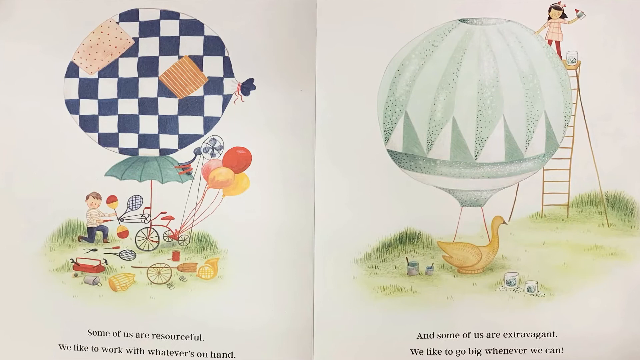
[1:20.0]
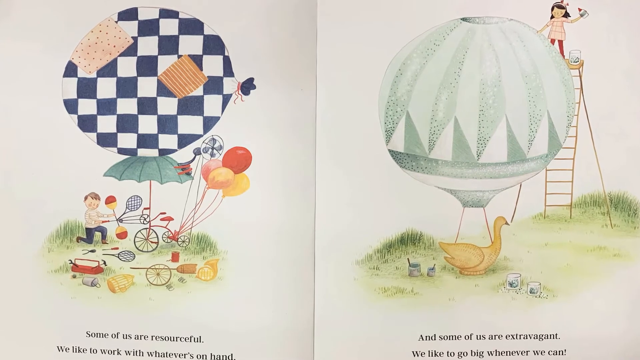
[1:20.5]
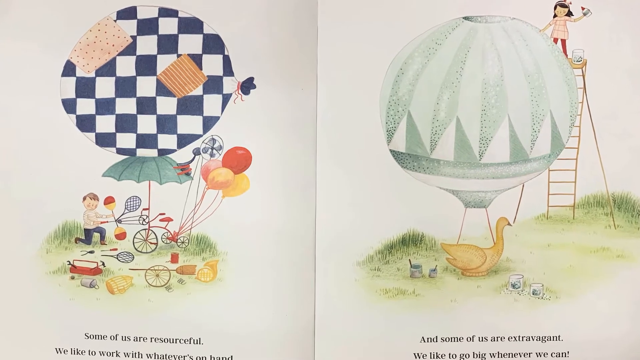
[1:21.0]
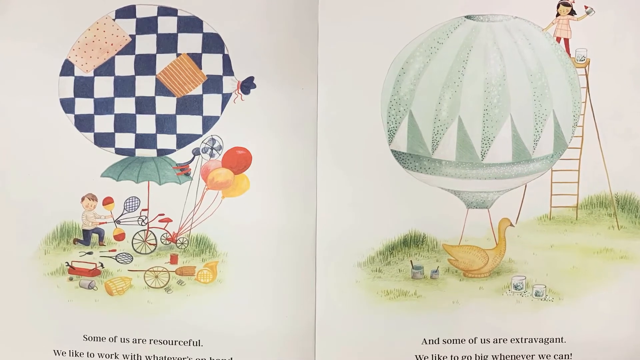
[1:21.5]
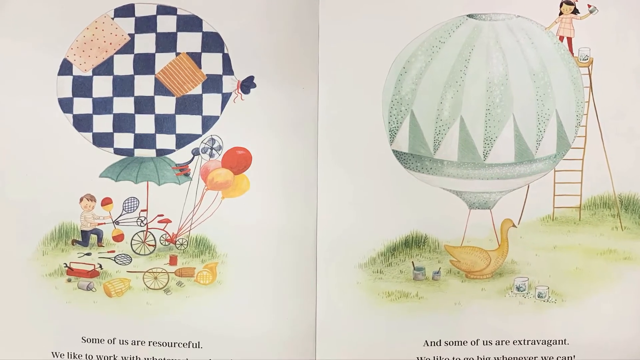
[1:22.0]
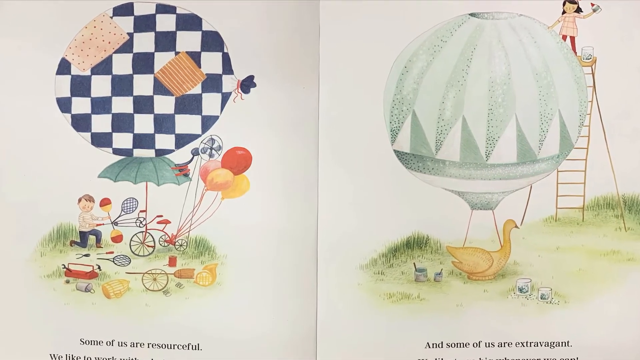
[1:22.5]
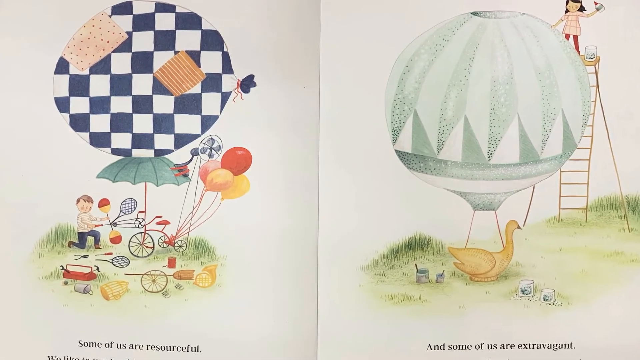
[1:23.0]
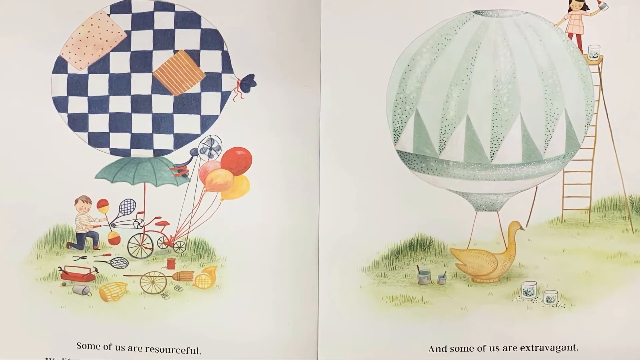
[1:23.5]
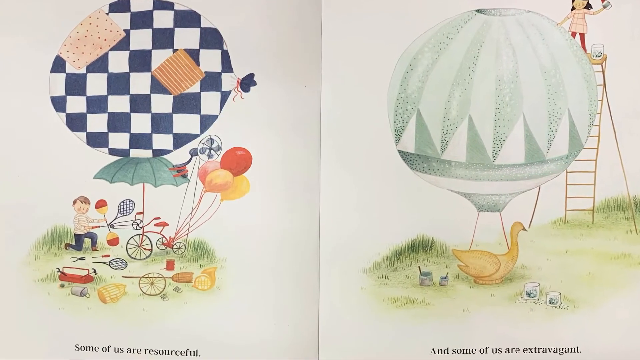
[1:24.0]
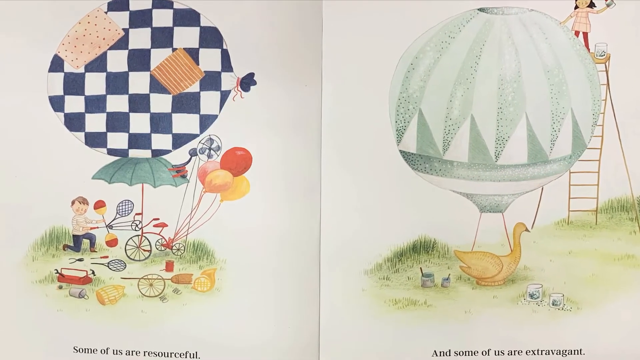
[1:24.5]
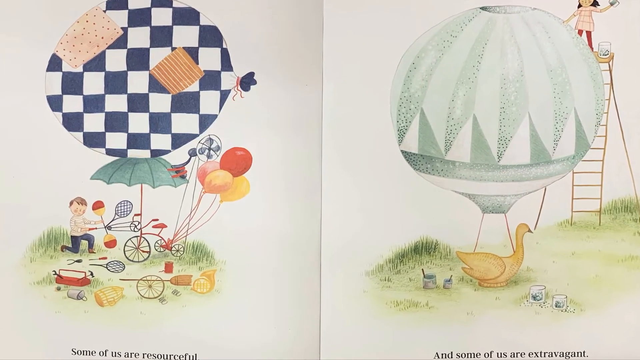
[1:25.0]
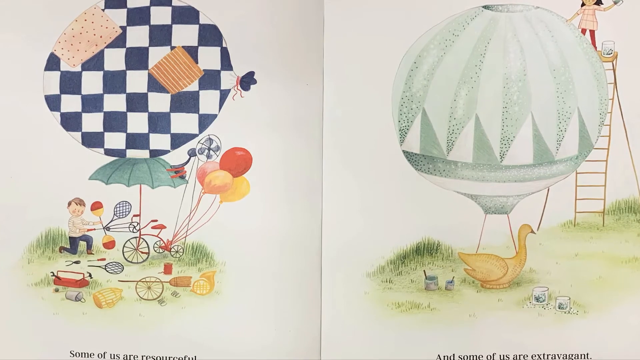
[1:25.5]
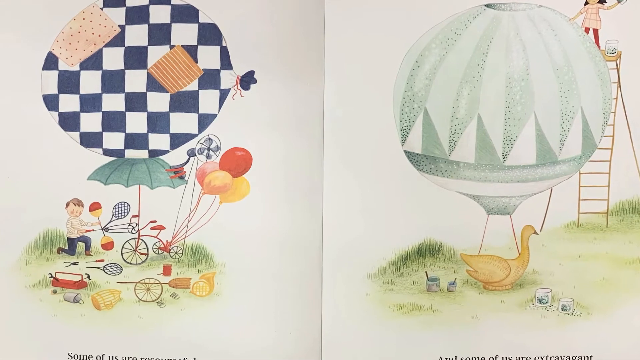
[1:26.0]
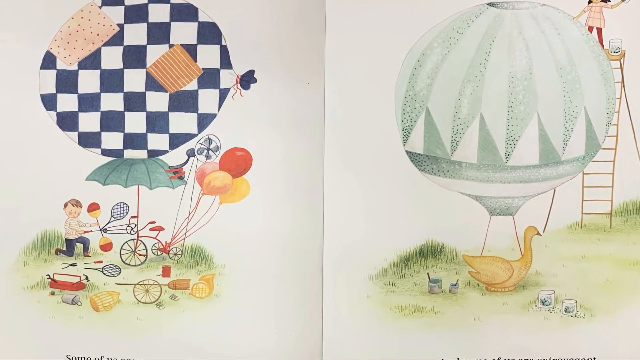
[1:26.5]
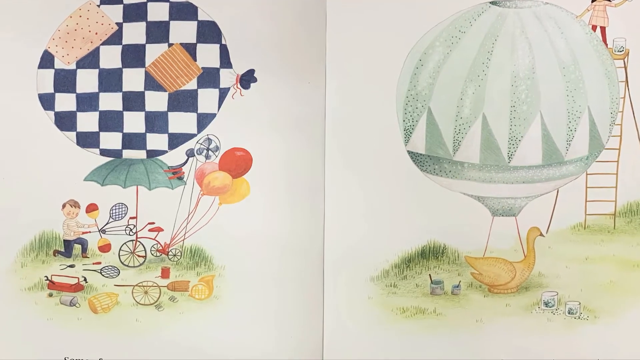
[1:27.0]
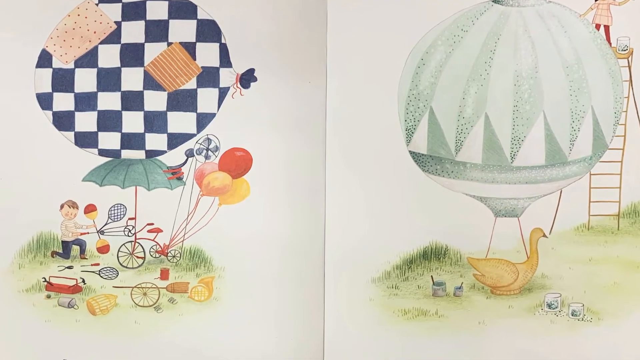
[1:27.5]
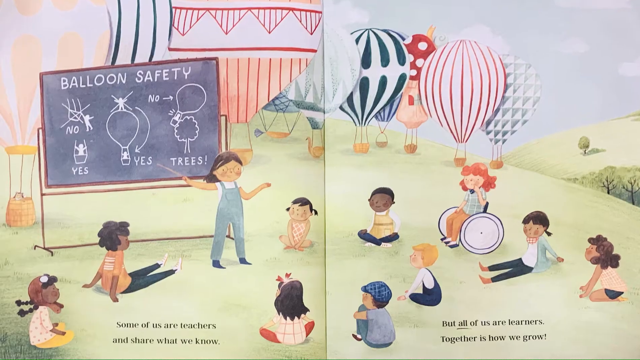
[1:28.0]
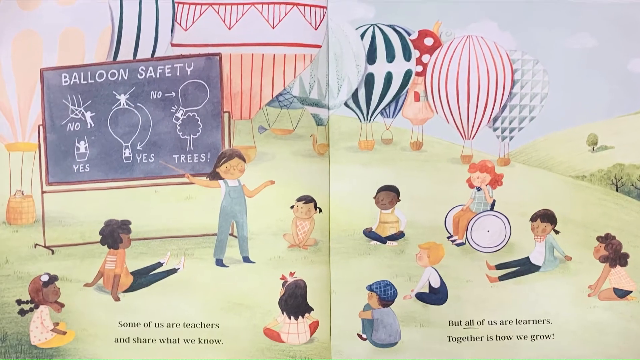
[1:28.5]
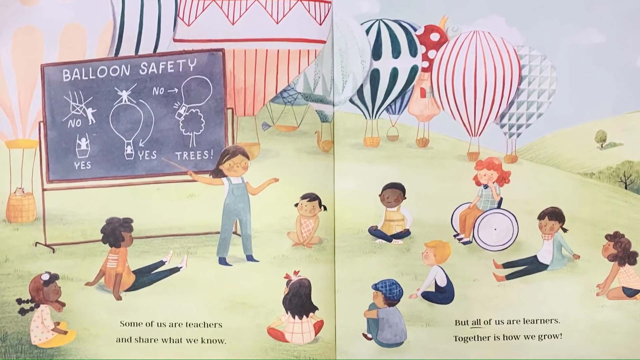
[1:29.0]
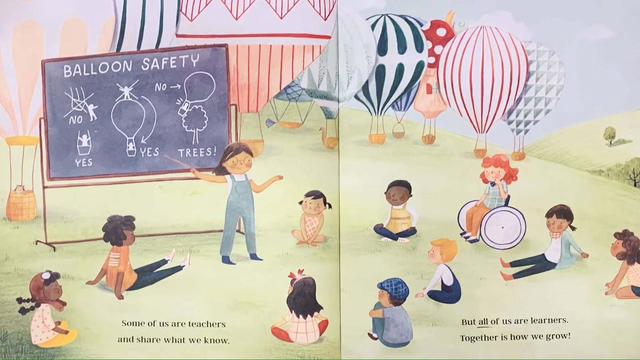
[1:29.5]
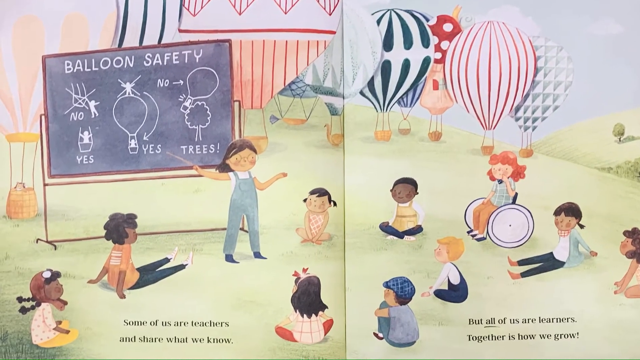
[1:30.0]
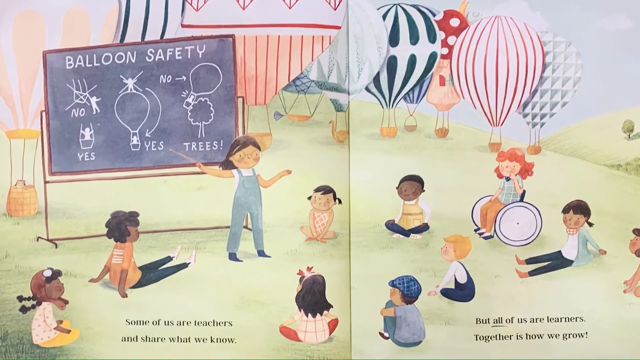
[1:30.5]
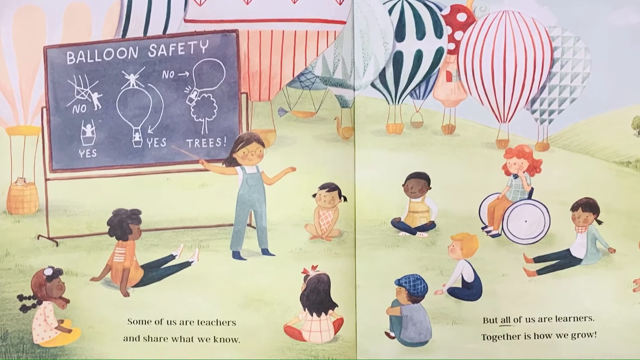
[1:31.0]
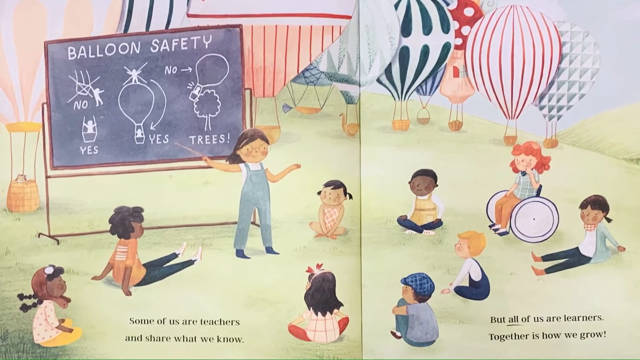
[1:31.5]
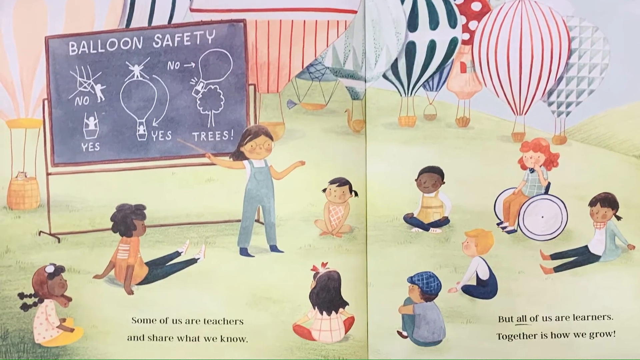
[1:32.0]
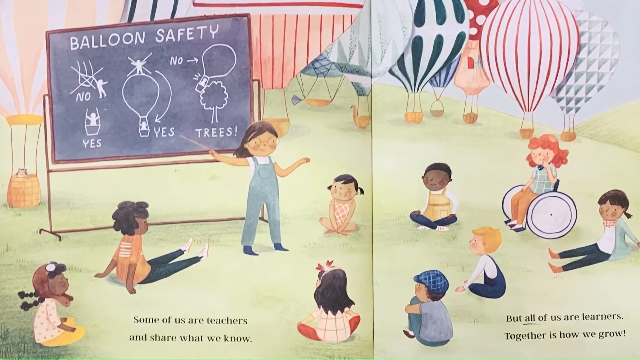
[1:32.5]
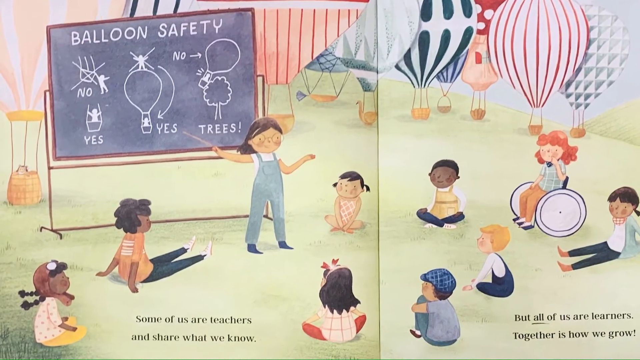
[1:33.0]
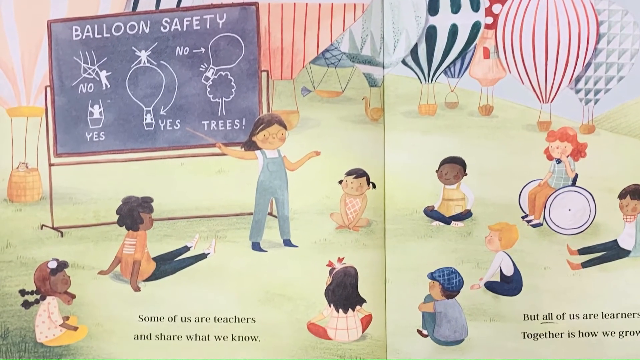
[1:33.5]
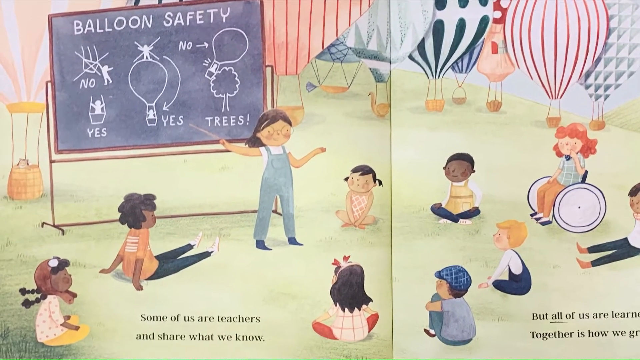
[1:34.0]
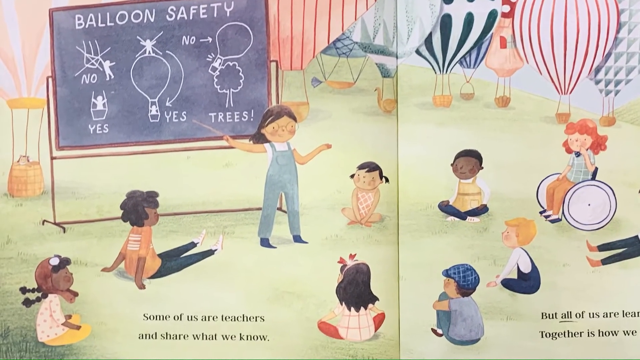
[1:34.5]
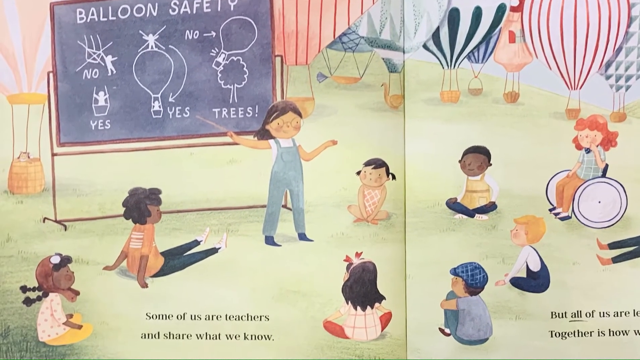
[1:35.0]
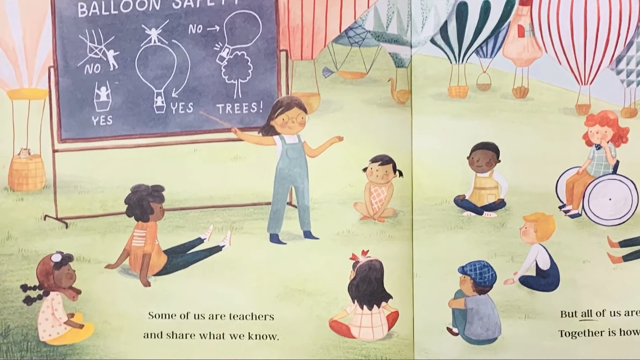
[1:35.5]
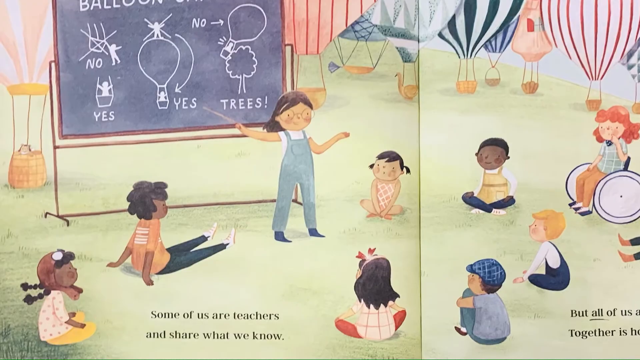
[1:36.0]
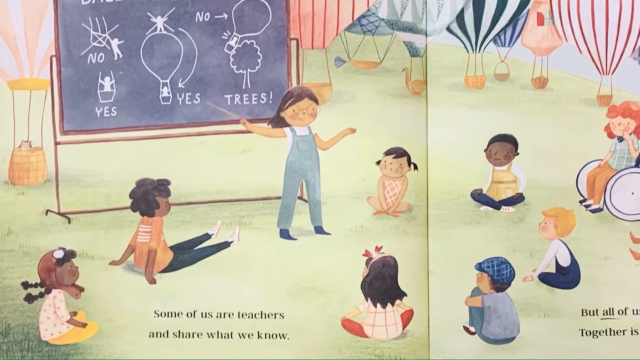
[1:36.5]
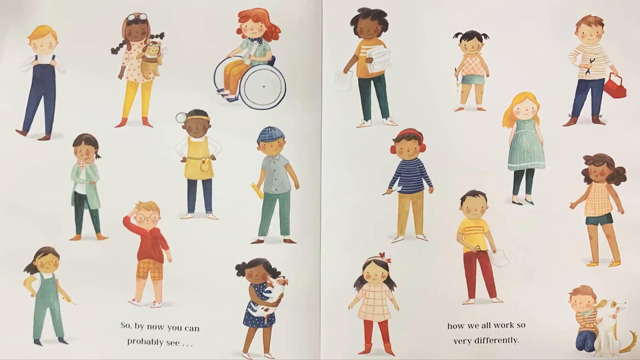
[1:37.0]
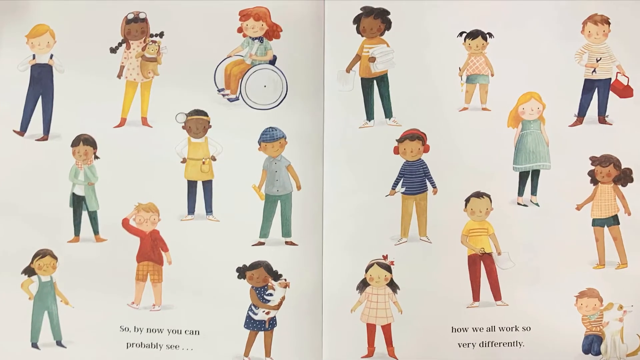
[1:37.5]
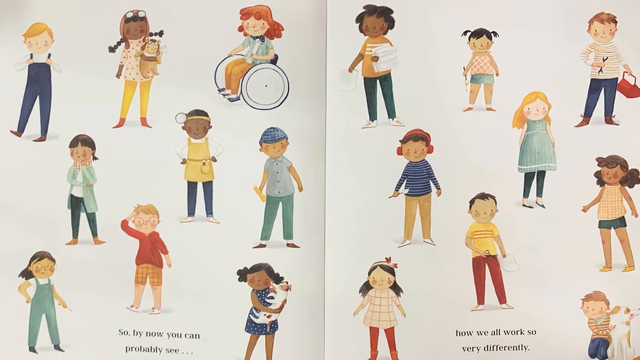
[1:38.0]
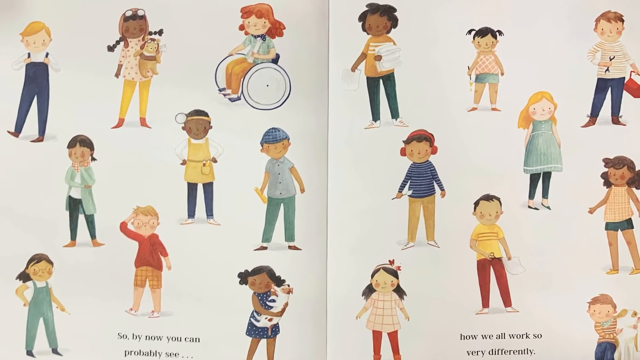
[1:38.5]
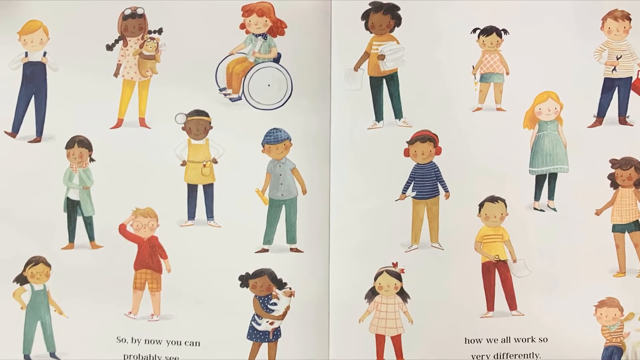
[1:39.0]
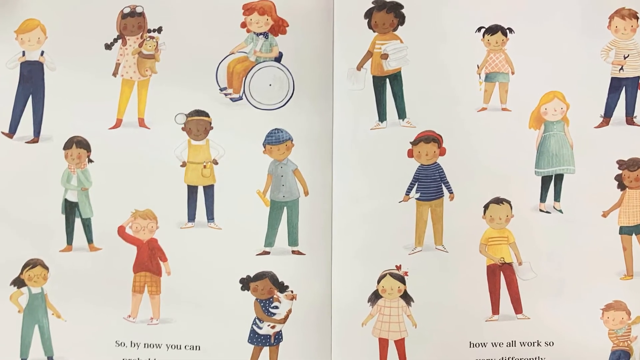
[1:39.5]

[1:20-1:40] The storybook is open on two pages. On the left is a hot air balloon in a navy and white checked pattern, with an umbrella underneath attached to some kind of bicycle wheel, plus tennis rackets and other things, and possibly even a fan attached; there are also some balloons, so it is basically a bike with an umbrella, balloons and hot air balloon fabric, and it looks quite technical. A little boy is sort of putting finishing touches on it and planning. On the right-hand page, a hot air balloon is attached to a swan-type bird figure, with lots of grass around and a ladder with a little child at the top putting finishing touches onto the balloon. The view slowly zooms in on the open book. On the next page, the left side shows a blackboard with "balloon safety" at the top and various rules: no attaching yourself to the basket but remaining within the basket at all times, no standing on top of the basket but staying inside it, and not going near any trees when flying. A slightly older-looking child is possibly talking through the rules to the younger children. On the right-hand side the balloons are all ready to go, and more children sit around looking at the teacher reading the rules; one is in a wheelchair, but most sit on the floor, listening to the safety announcement. The next page shows many different children standing together, of different genders and ethnicities and in different clothing, all looking very happy.